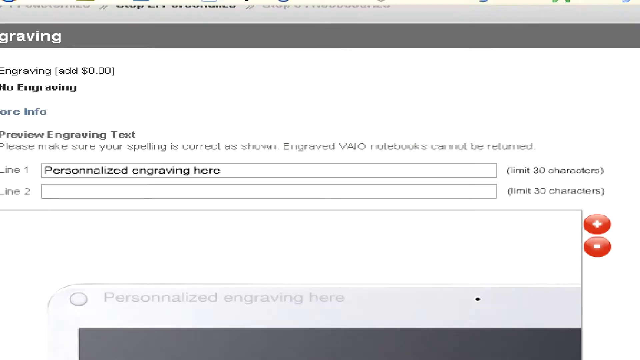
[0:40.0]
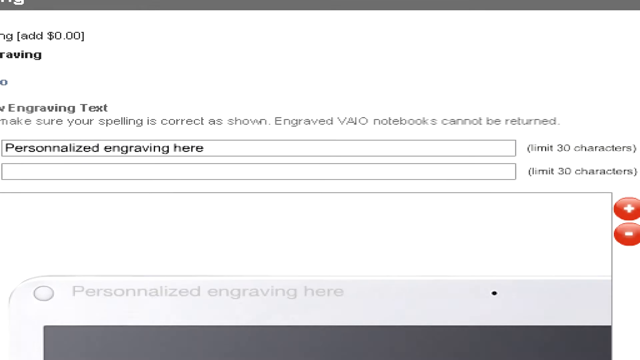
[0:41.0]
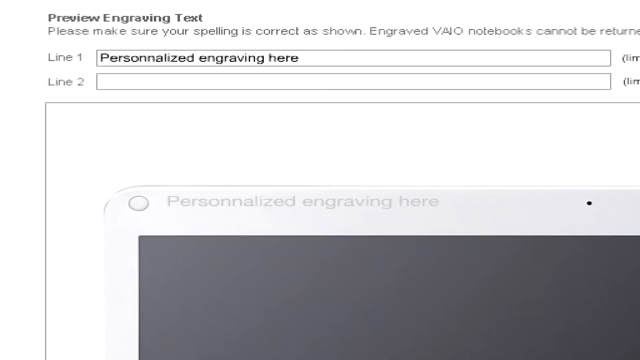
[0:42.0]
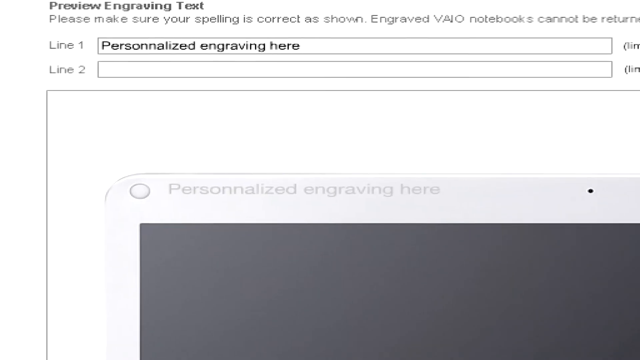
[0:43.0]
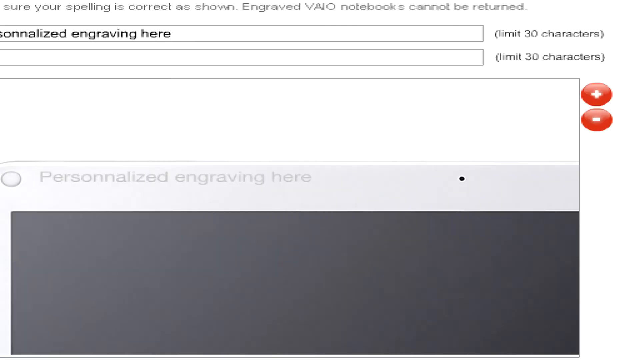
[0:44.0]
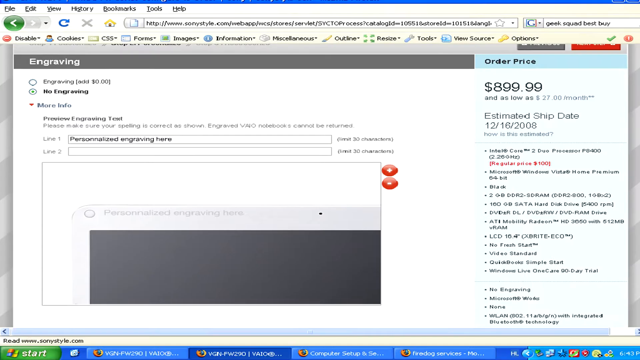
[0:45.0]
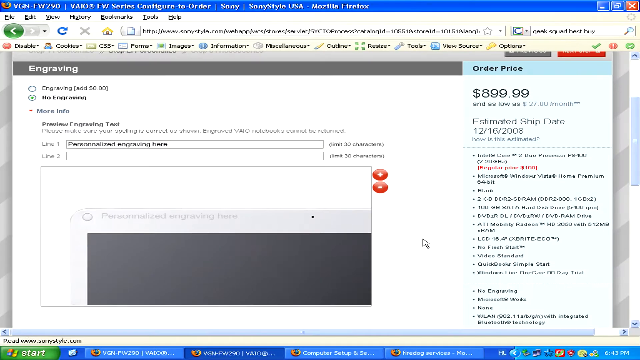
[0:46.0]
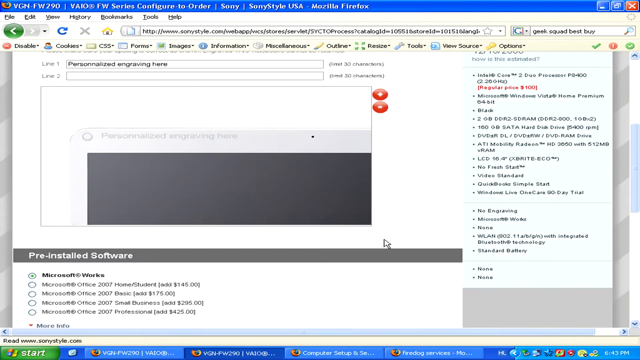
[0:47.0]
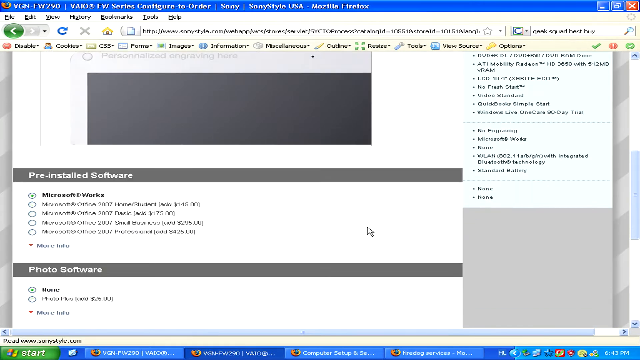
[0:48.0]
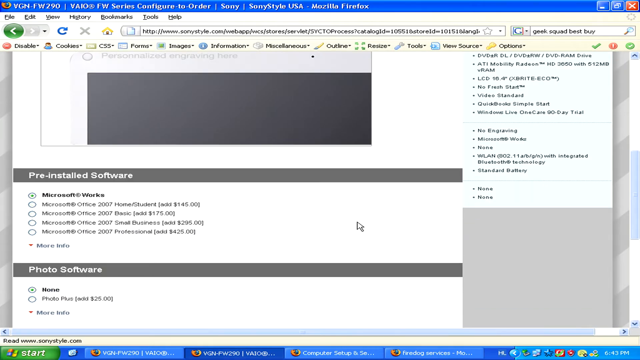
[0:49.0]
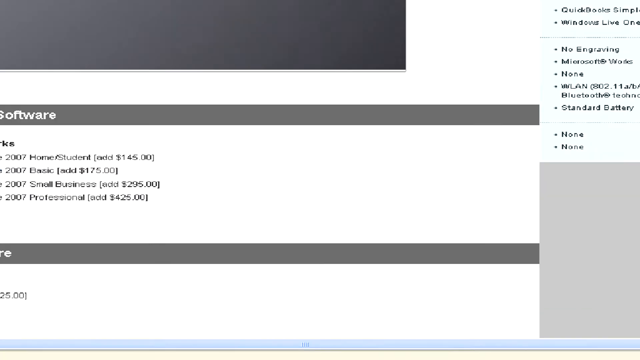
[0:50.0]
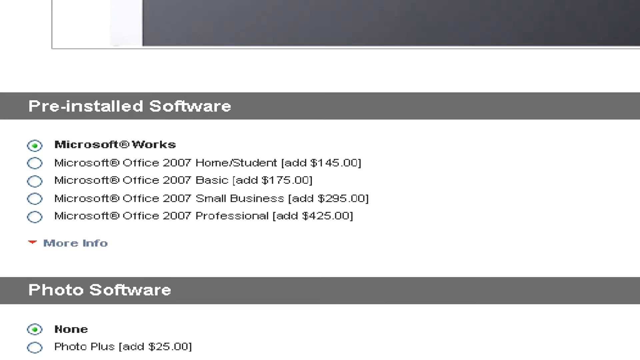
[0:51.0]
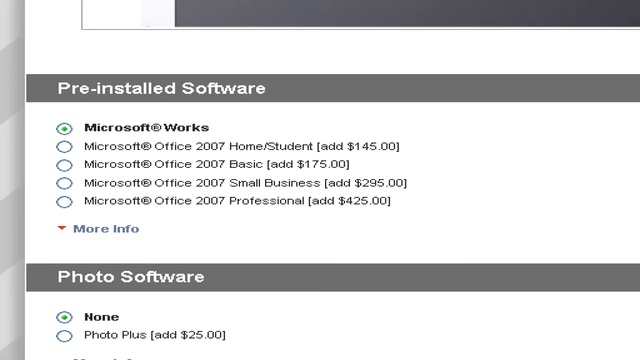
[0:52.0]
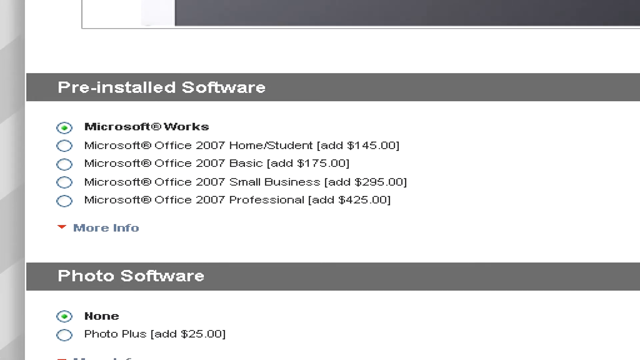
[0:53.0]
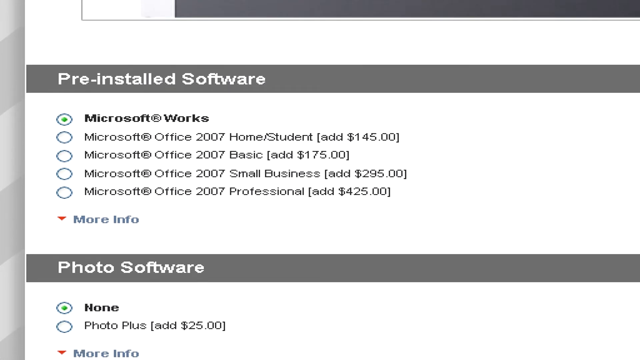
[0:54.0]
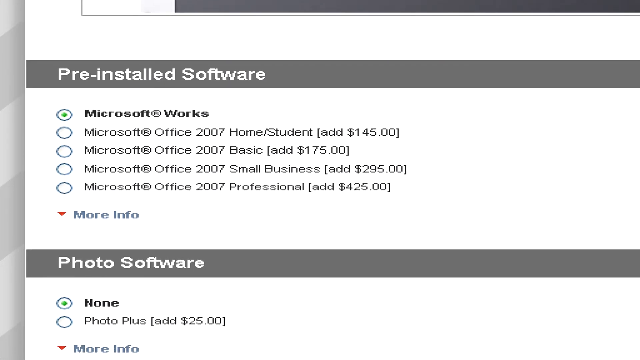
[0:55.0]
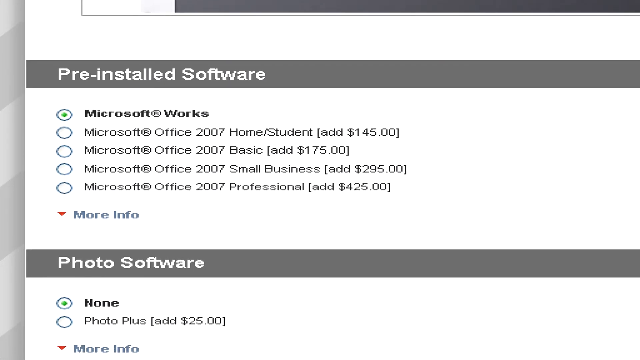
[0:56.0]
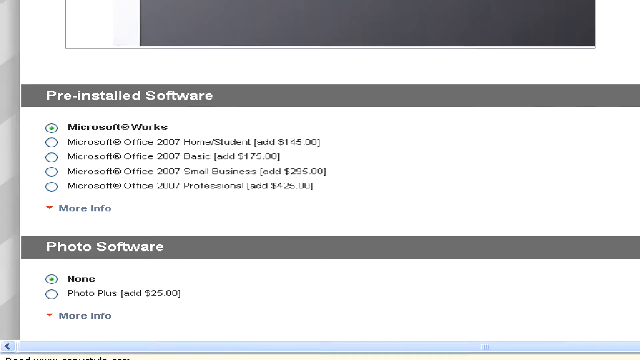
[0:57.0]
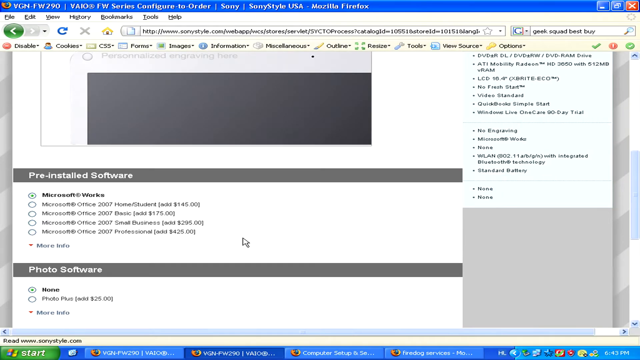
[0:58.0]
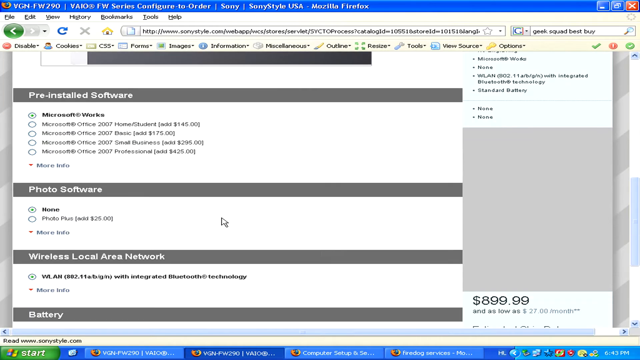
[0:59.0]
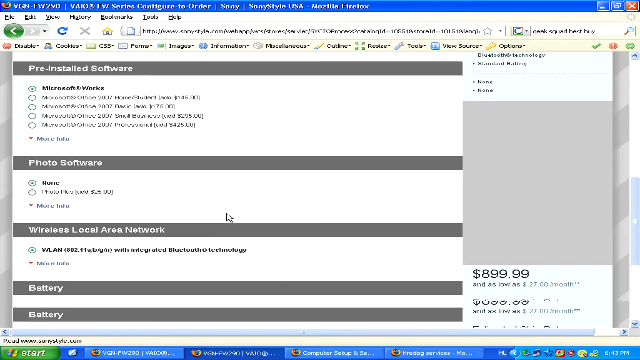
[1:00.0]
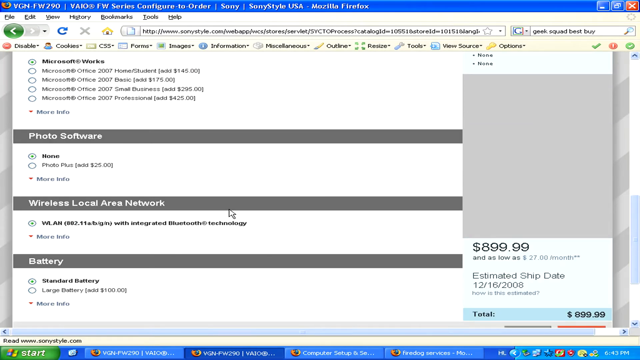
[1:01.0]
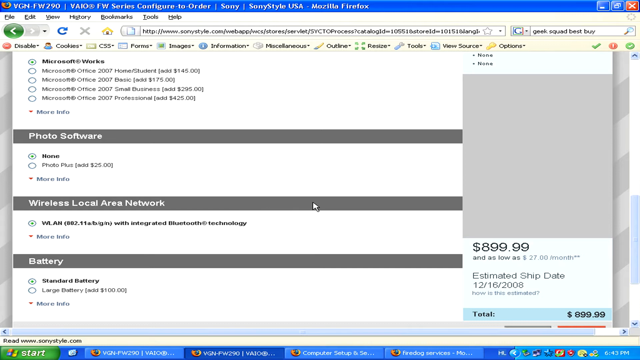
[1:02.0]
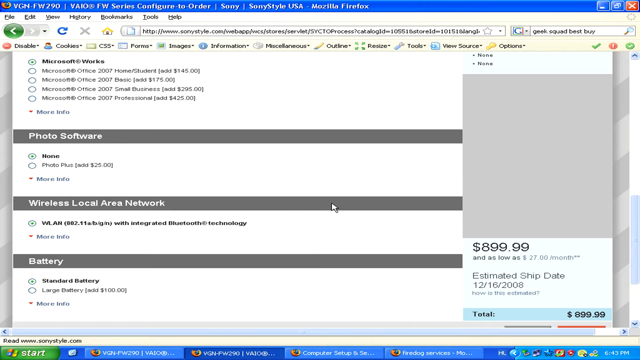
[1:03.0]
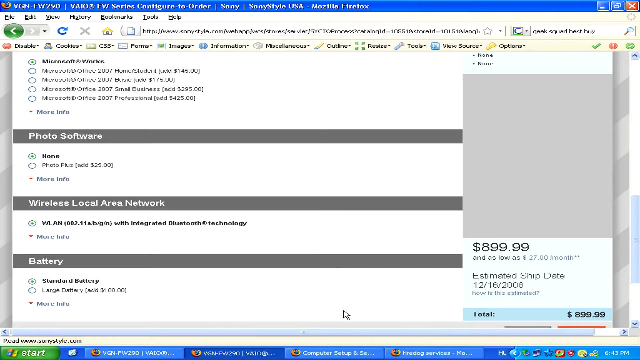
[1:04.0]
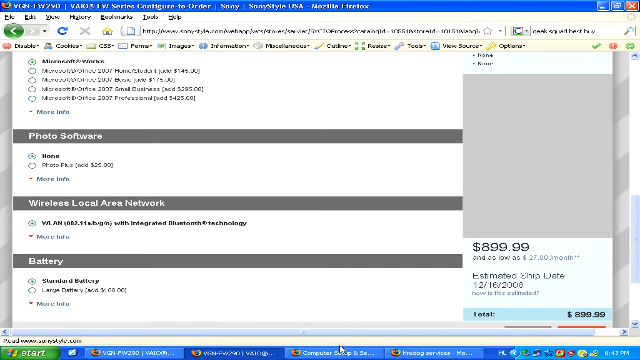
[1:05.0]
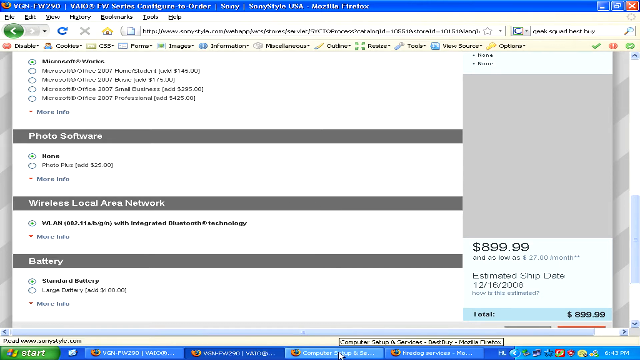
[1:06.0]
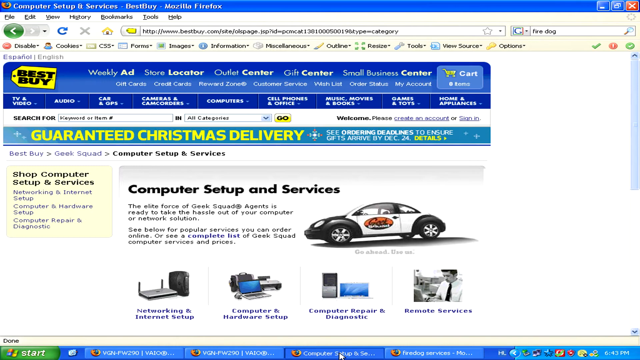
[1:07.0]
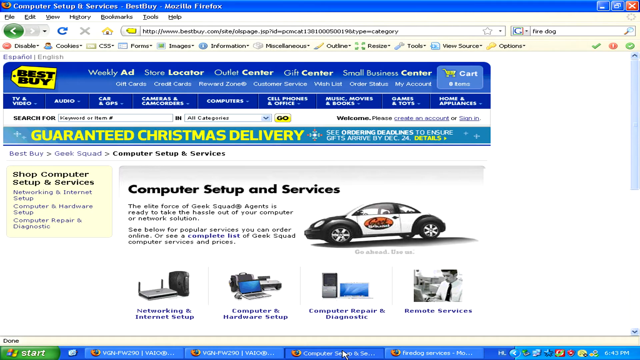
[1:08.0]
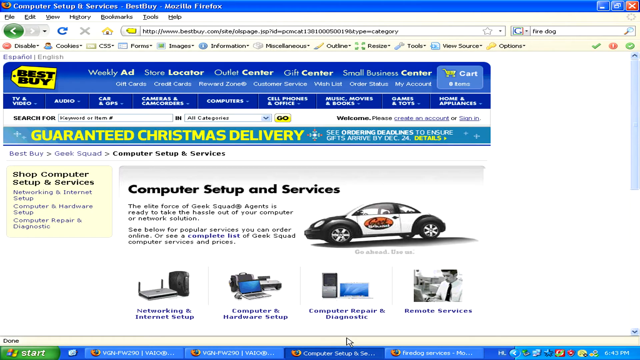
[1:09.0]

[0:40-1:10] The engraving section shows engraving available for $0, currently set to no engraving, with fields for text on line 1 or line 2. Line 1 contains the text "personalize engraving here", with a 30-character limit for both lines. The man adjusts his screen to the section with "personalize engraving here", then scrolls down to sections such as pre-installed software, where Microsoft Works is selected, and photo software, where None is selected. He scrolls in to the pre-installed software and photo software section. Other pre-installed software options are listed: Microsoft Office 2007 Home Student at $145, Microsoft Office 2007 Basic at $175, Microsoft Office 2007 Small Business at $295 and Microsoft Office 2007 Professional at $425. Photo software is set to None, with an option to add Photo Plus for an additional $25. Other settings include Wireless Local Area Network, WLAN with integrated Bluetooth technology, and the battery, set to the standard battery with a larger battery available for an additional $100. He then clicks to another screen for Best Buy in Mozilla Firefox, showing "guaranteed Christmas delivery" and "computer setup and services" with the text "The elite force of Geek Squad agents is ready to take the hassle out of your computer or network solution. See below for popular services you can order online or see a complete list of Geek Squad computer services and prices." The site lists networking and internet setup, computer and hardware setup, computer repair and diagnostic, and remote services options. He scrolls and zooms into that section.